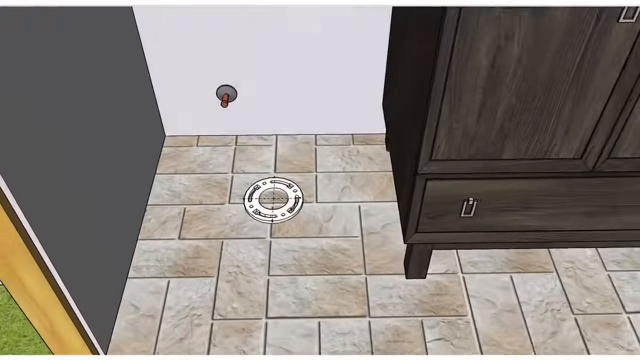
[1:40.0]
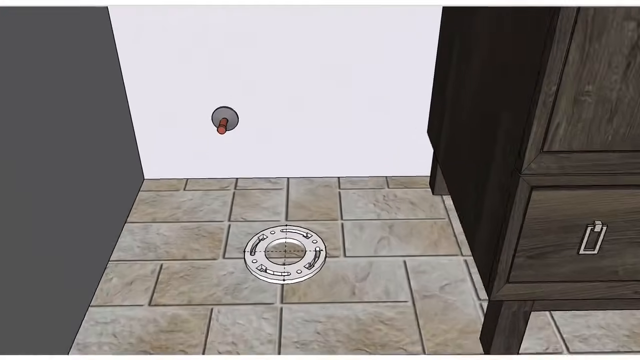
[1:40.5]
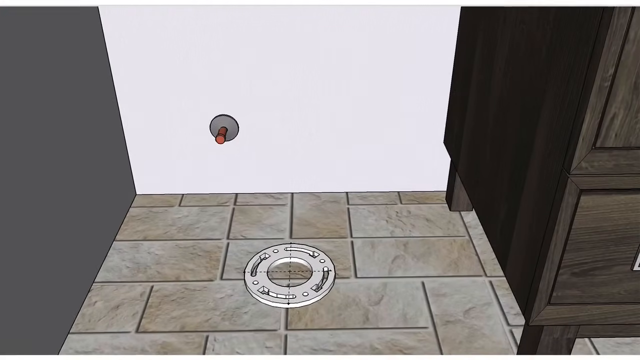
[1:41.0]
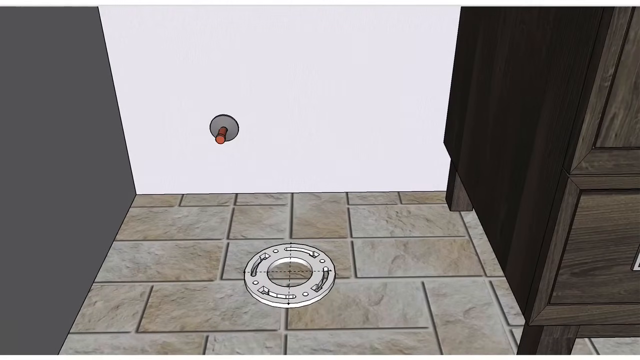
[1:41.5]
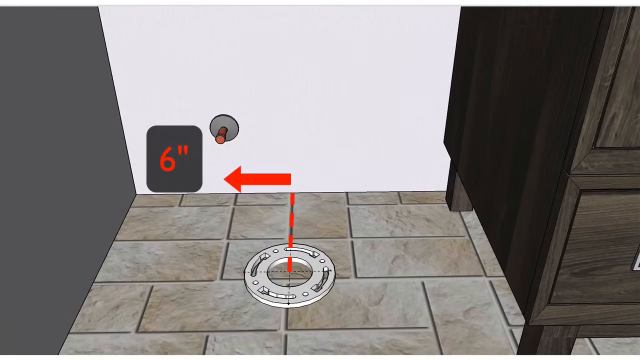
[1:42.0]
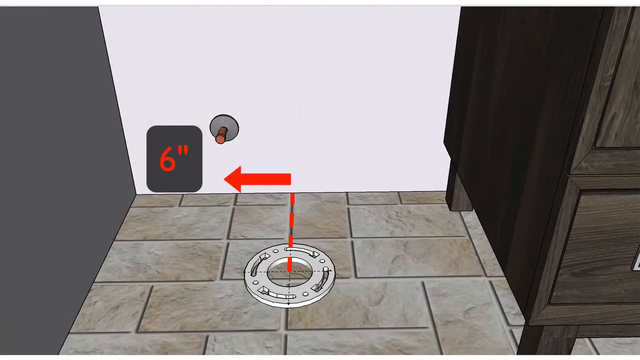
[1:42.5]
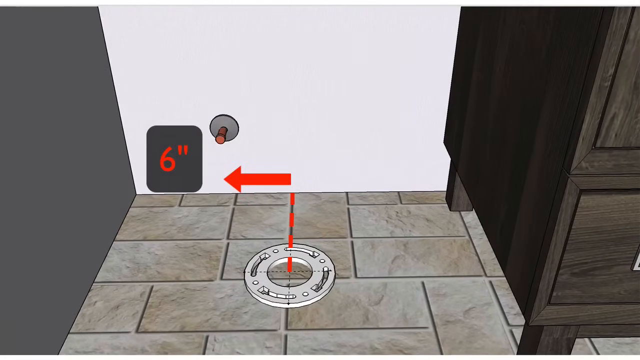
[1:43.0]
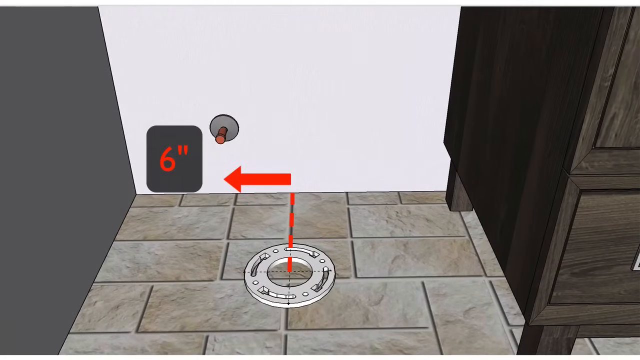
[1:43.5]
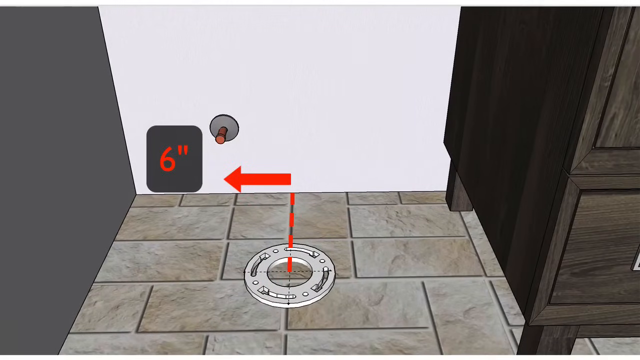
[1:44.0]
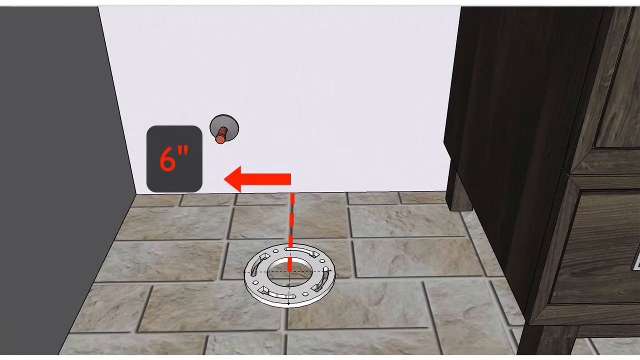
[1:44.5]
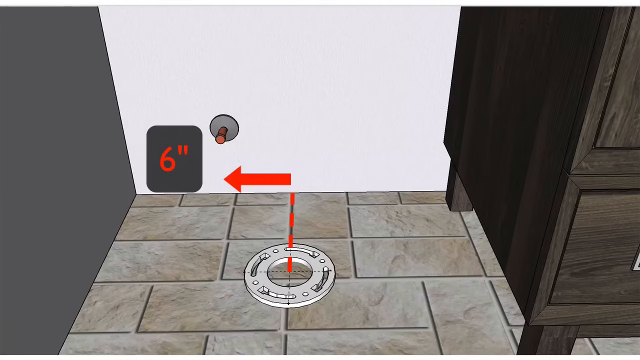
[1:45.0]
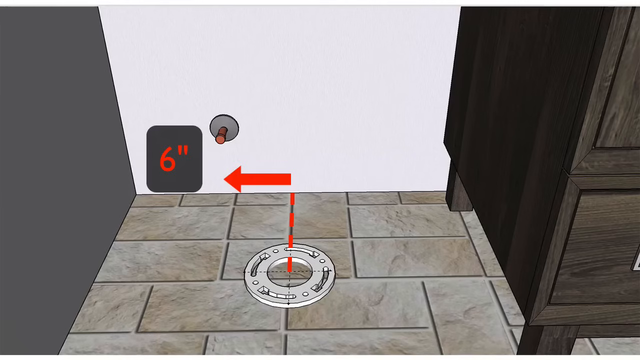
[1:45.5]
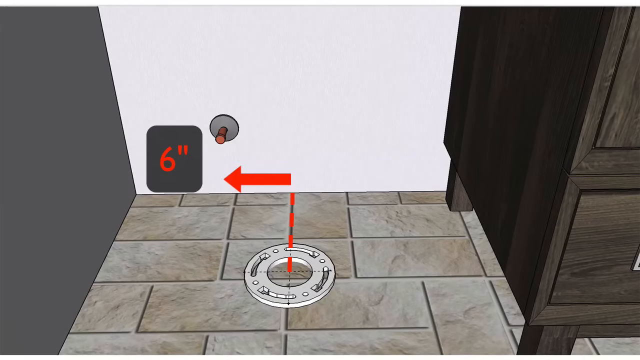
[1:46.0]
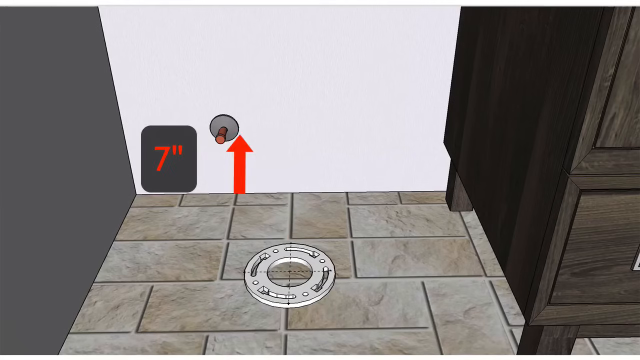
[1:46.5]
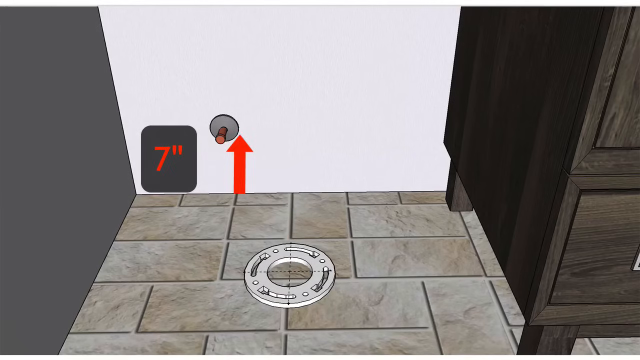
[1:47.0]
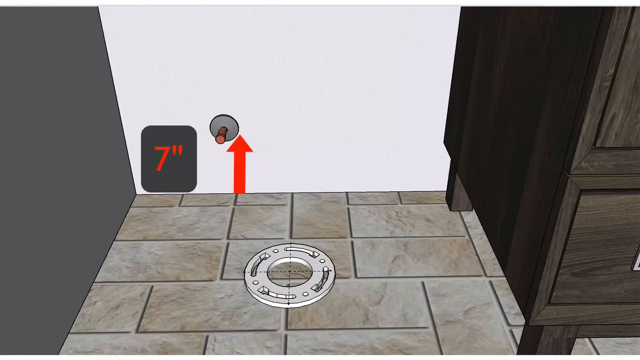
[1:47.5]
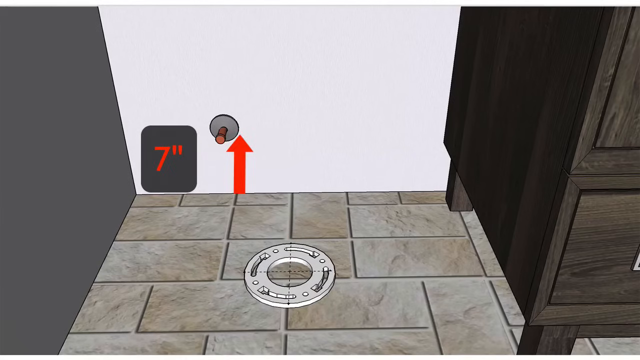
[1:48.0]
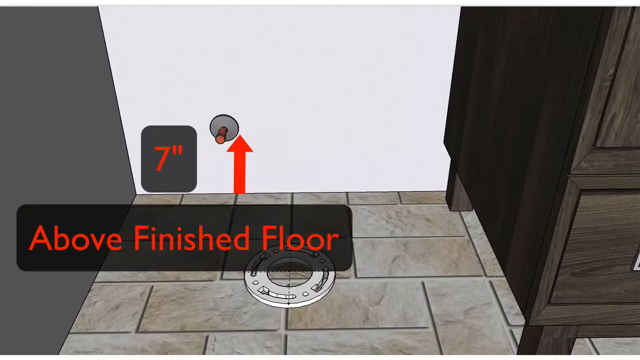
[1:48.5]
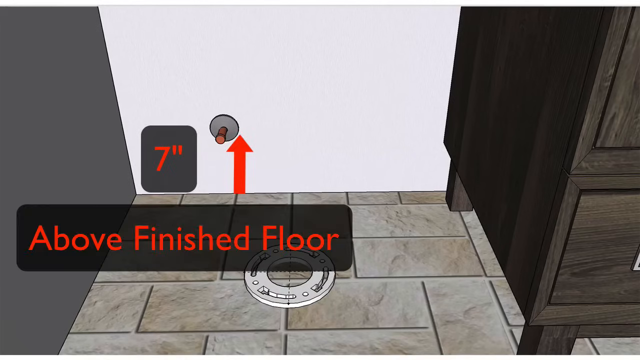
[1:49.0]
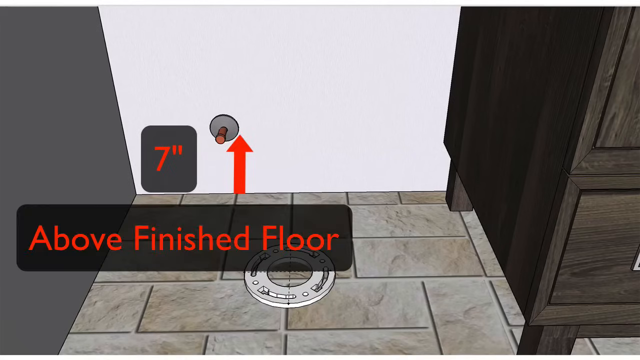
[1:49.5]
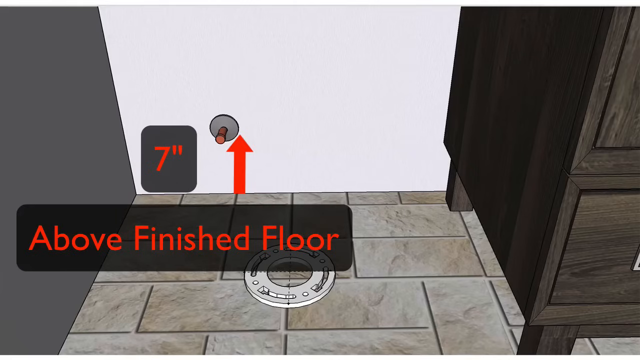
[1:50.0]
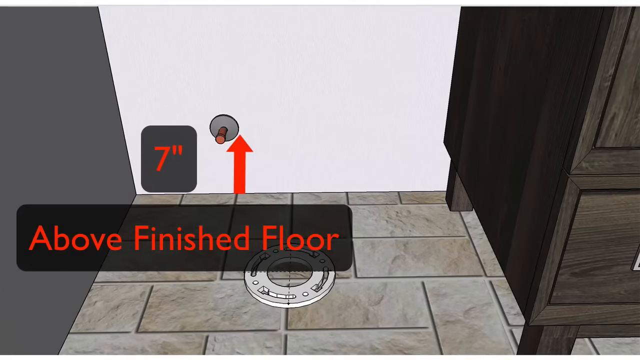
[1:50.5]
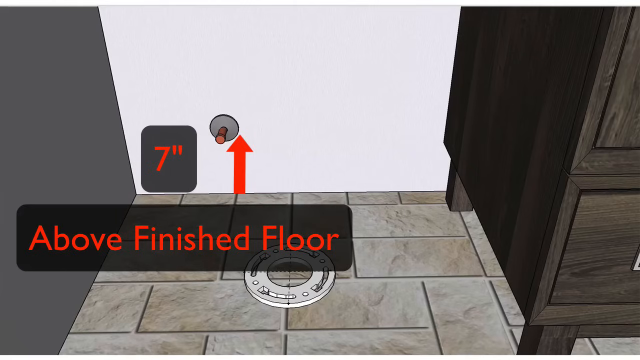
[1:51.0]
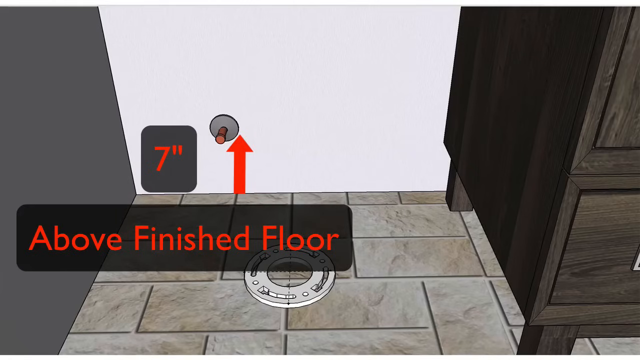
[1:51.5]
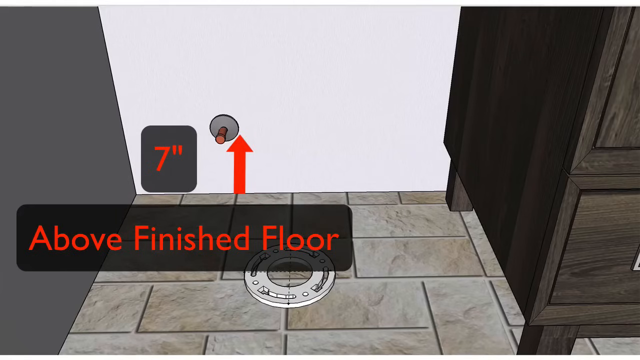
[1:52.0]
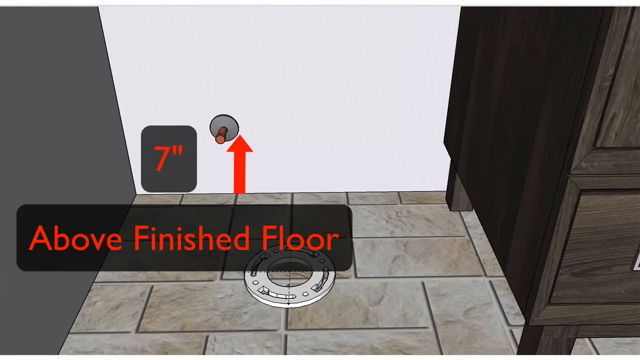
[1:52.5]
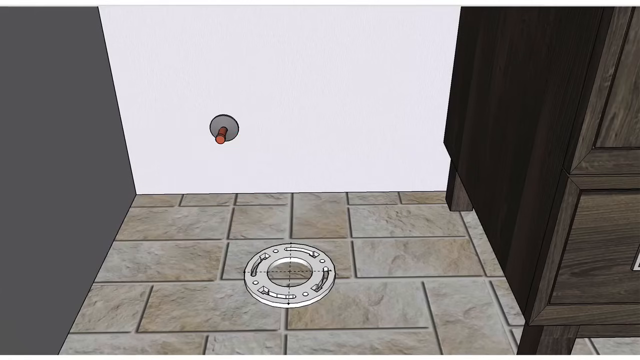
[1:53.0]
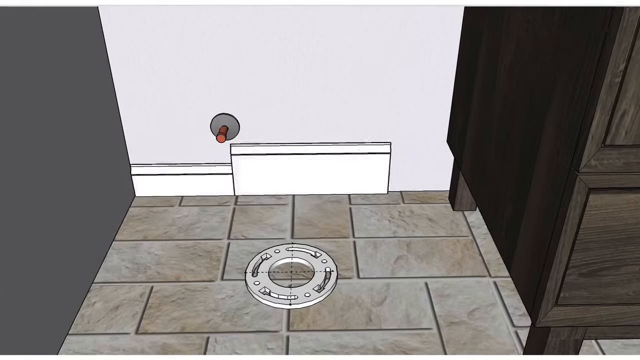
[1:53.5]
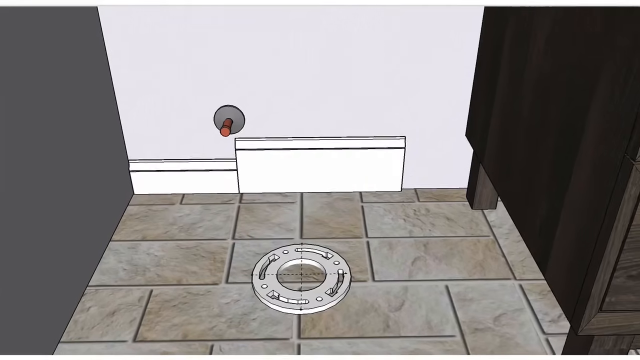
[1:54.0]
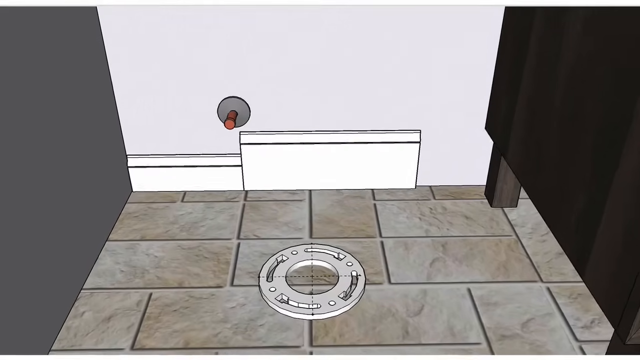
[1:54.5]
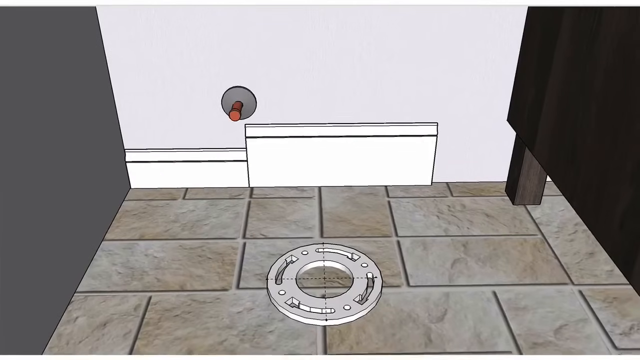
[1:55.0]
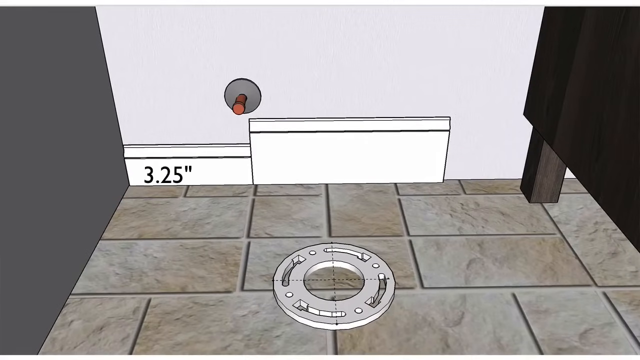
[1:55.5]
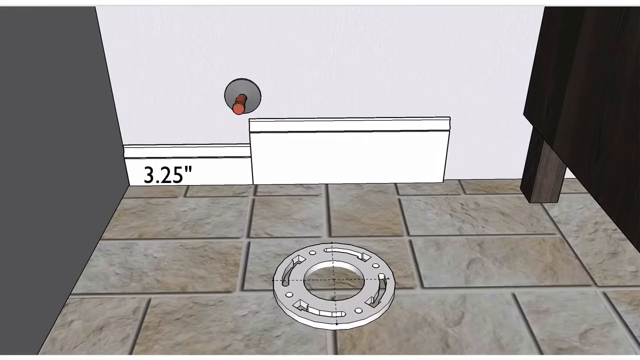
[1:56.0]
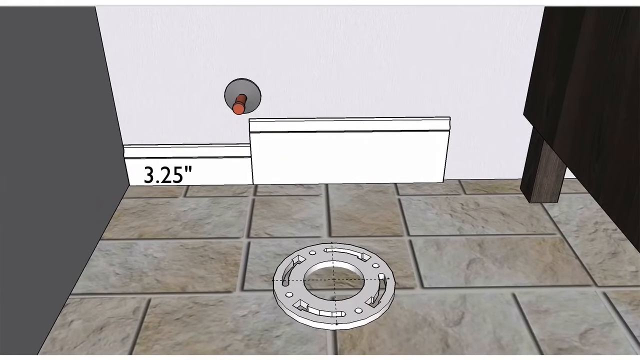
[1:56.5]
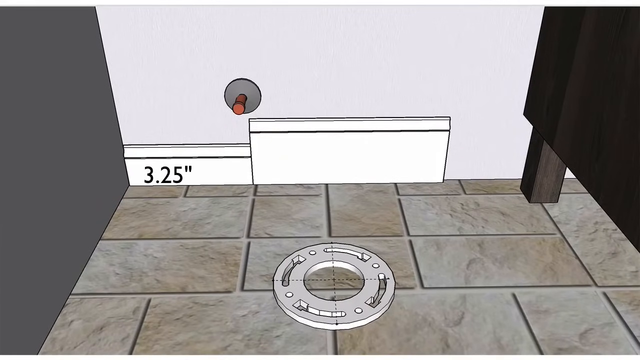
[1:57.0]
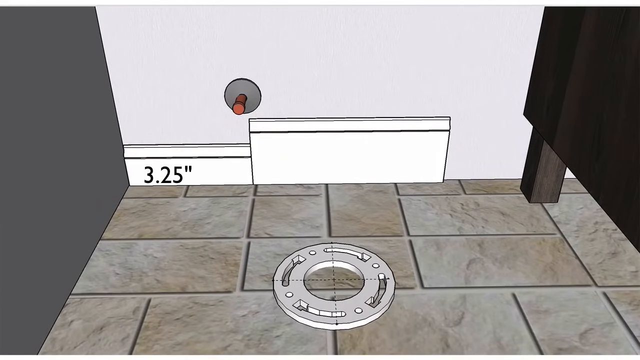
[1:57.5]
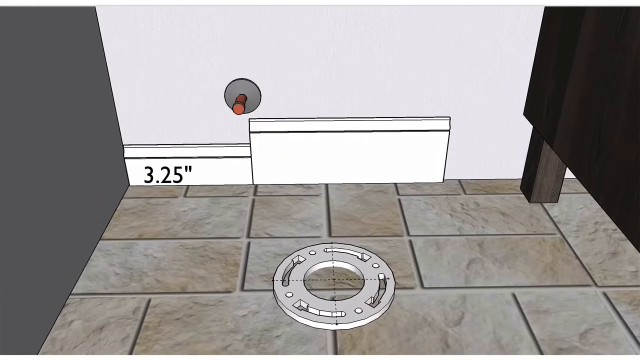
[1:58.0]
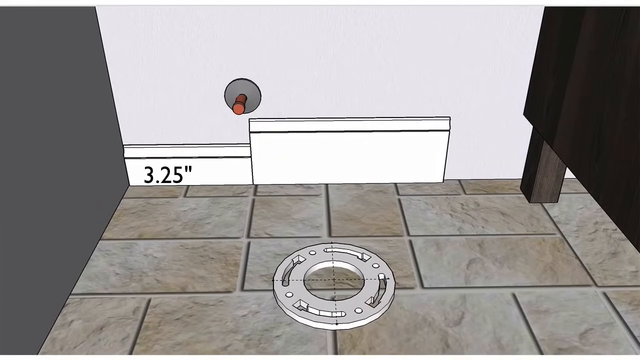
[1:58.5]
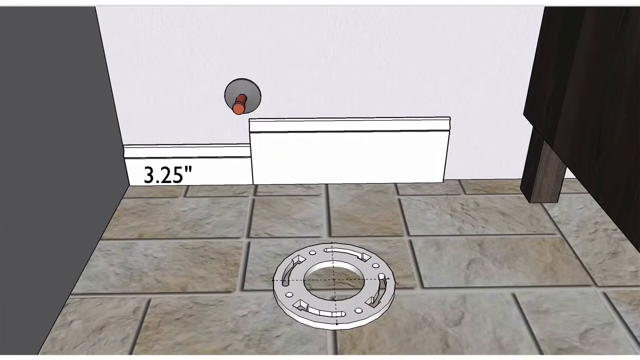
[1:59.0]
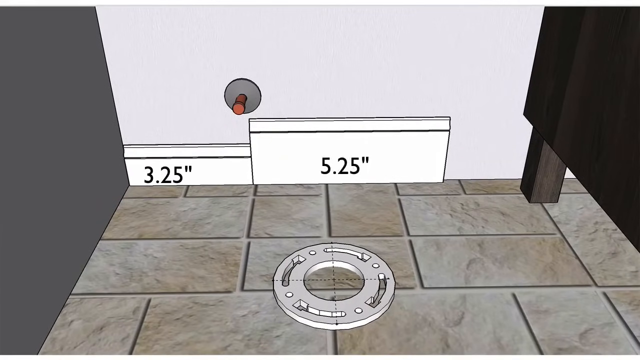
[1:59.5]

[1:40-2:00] An animated model of what looks like a toilet shows a drain on a tiled floor and what looks like a brown switch on the wall beside it. As the view zooms toward the sink, a dark brown wooden cupboard housing a sink and faucets is on the right side of the screen. An arrow pointing away from the sink, on a red and grey cylindrical line, appears, with the text 6'' on a dark grey background in front of it. The arrow then moves toward the grey wall, very close to what looks like a brown switch, with the text 7'' on a similar background beside it. Red text on a transparent dark grey background then reads "Above Finished Floor". The view begins to zoom toward the corner of the floor as the text 3.25'' appears at the bottom, and a few inches from it is the text 5.25''; both readings are on newly appearing white wooden panels at the edge of the floor.